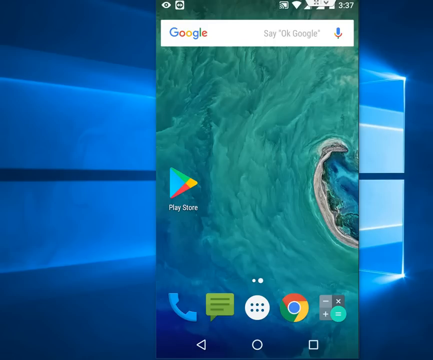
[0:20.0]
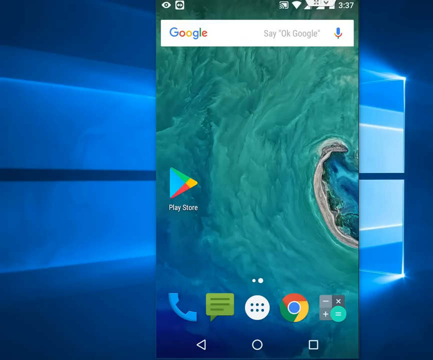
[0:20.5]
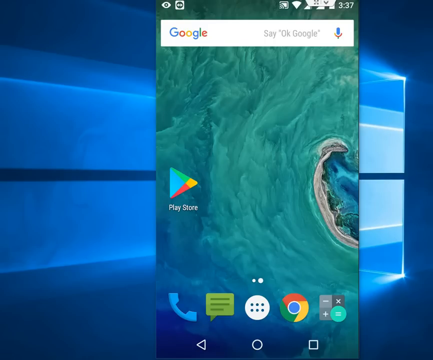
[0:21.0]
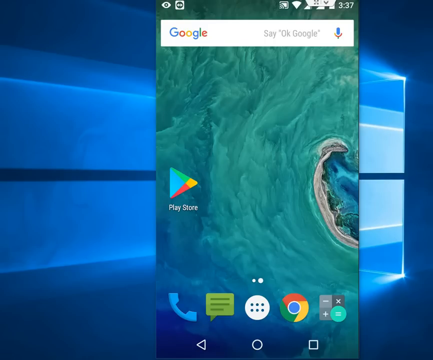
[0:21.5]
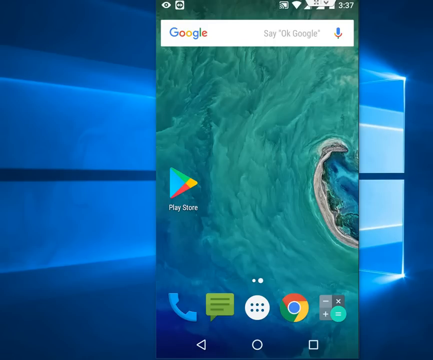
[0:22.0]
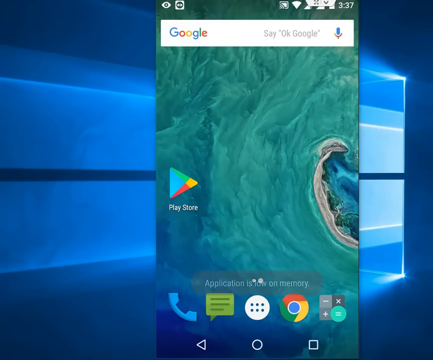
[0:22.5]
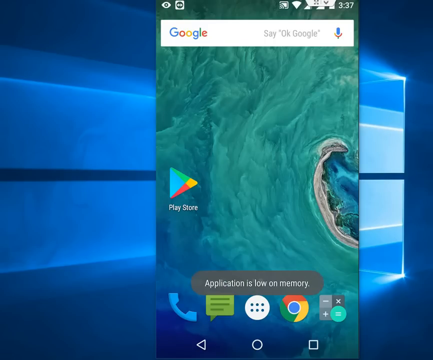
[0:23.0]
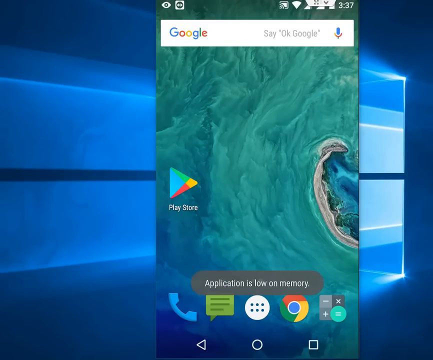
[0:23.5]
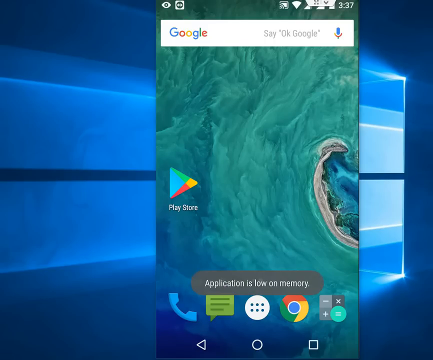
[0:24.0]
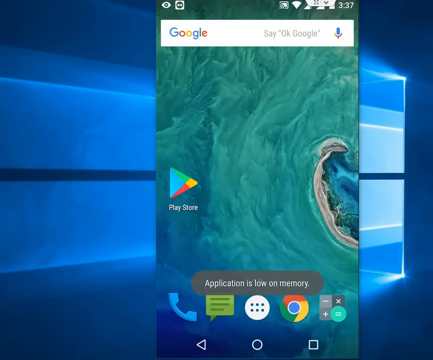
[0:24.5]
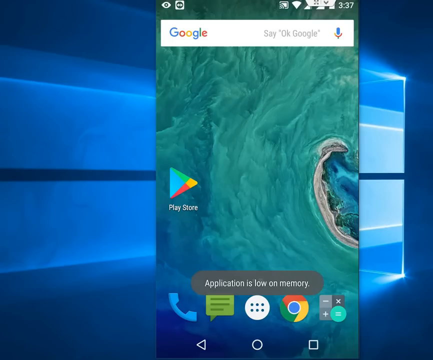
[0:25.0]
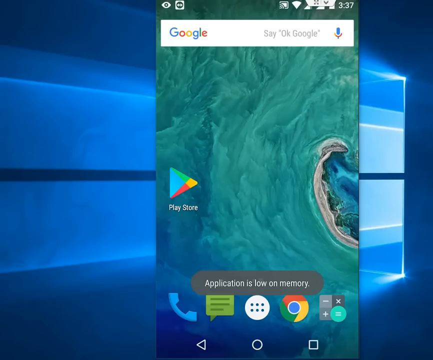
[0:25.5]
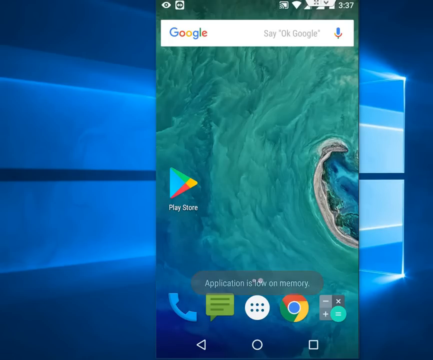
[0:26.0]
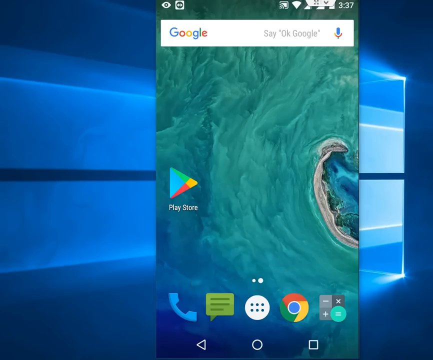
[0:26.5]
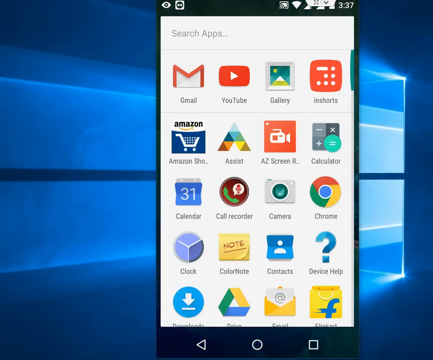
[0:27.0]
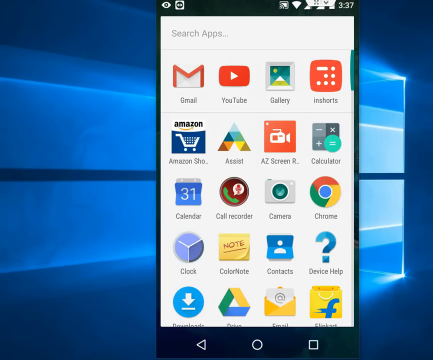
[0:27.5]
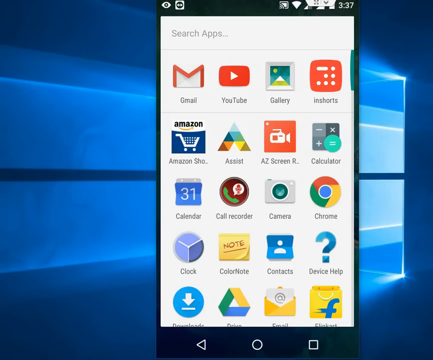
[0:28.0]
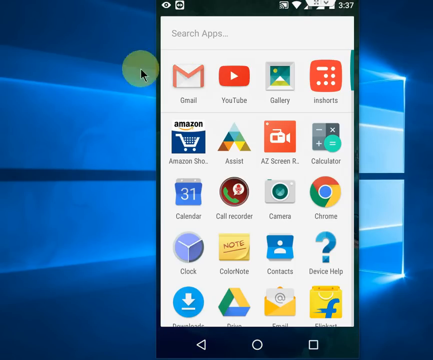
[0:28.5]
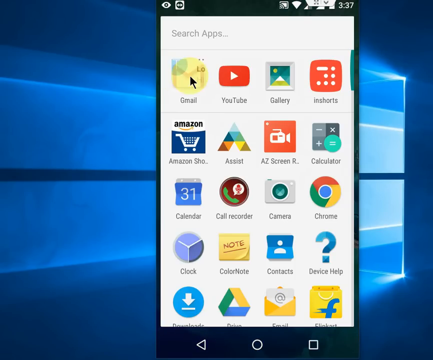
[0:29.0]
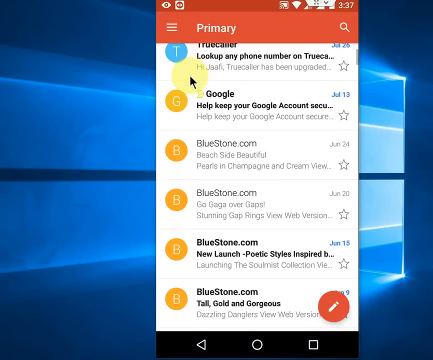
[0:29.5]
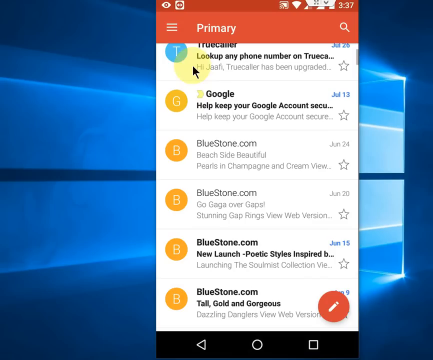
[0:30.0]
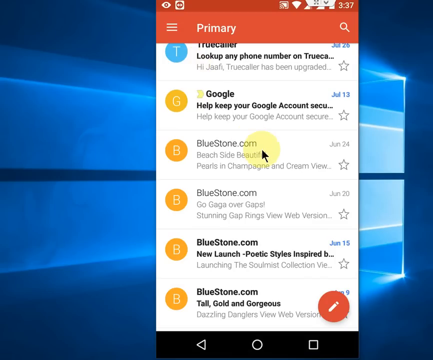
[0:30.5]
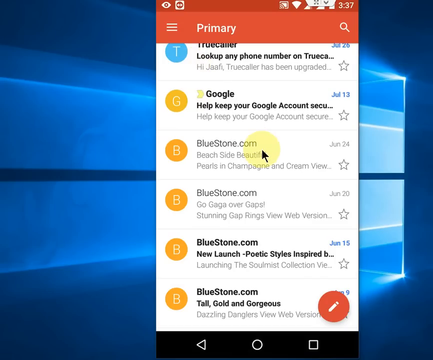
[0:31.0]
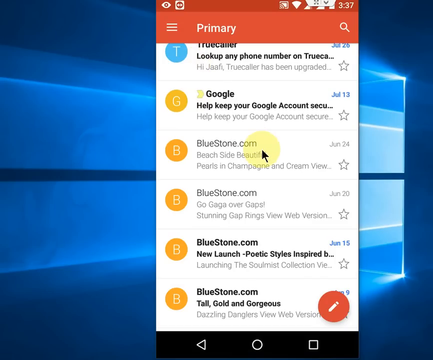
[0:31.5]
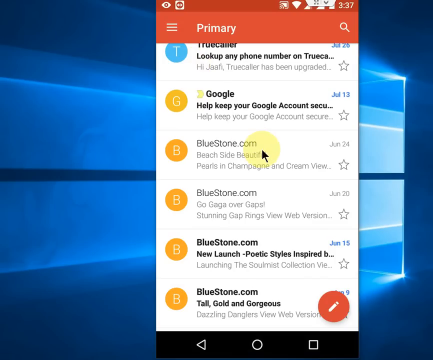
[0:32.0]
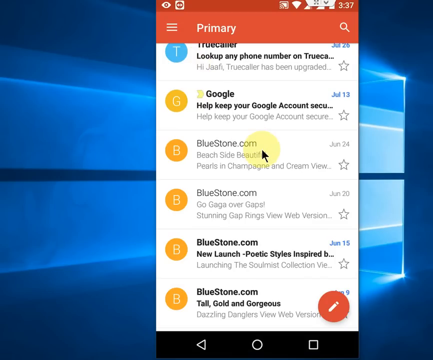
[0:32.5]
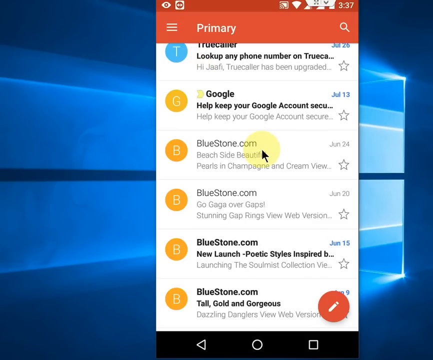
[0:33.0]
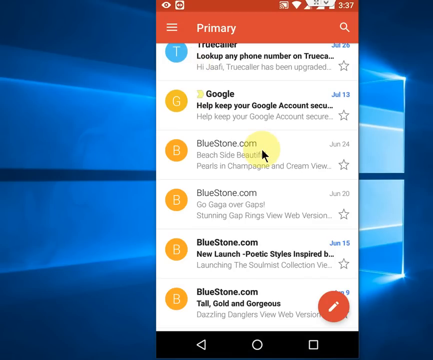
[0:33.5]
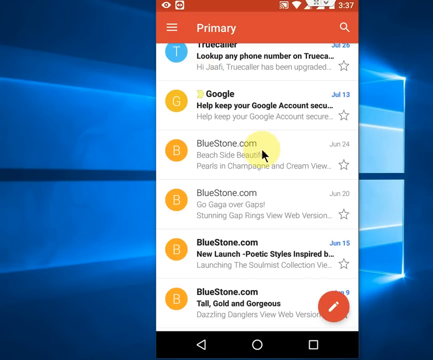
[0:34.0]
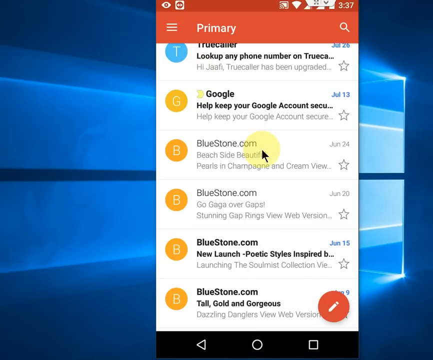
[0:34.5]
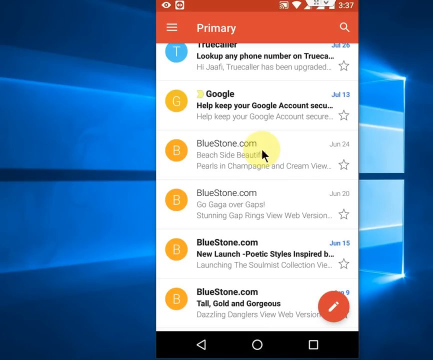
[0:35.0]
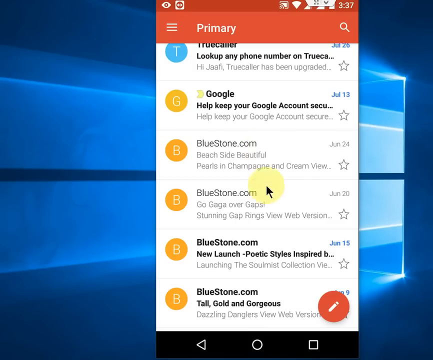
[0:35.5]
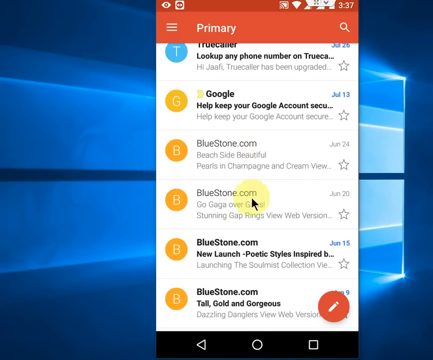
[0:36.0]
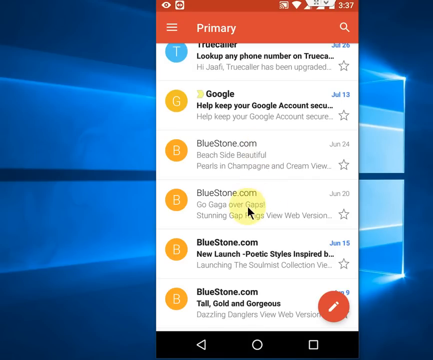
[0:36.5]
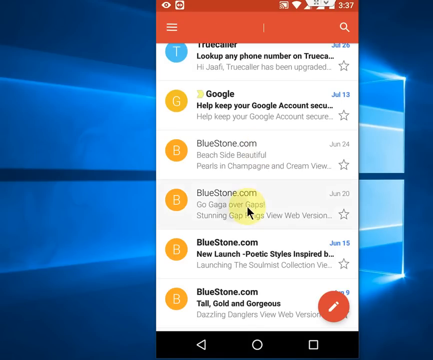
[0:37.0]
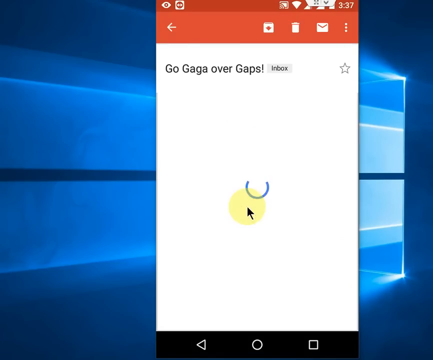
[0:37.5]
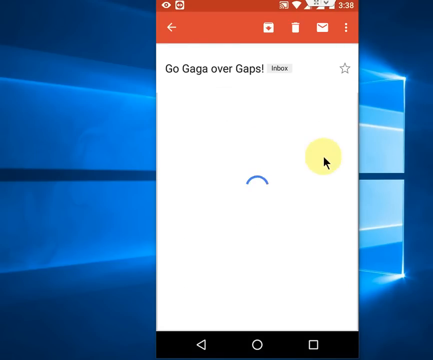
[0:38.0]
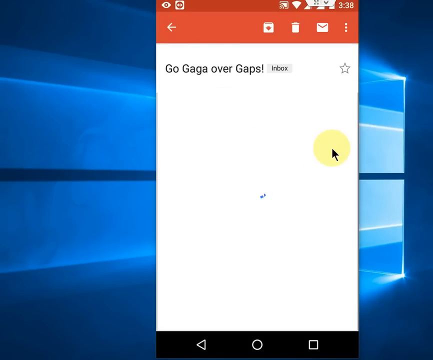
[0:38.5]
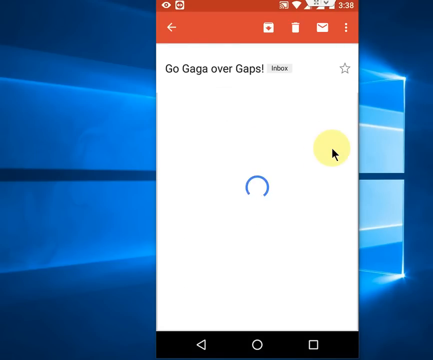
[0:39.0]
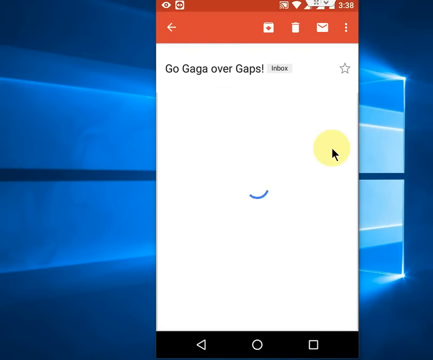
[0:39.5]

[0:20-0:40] The same blue screen is shown. At the bottom, "application is low on memory" appears in a gray rounded rectangle just above the icons at the bottom of the page: the phone, the text, the white circle, Google Chrome and the calculator. The blue background is the same, but the green front screen has switched to a list of the apps on the phone, which looks like Gmail, YouTube, Gallery, InShorts, Amazon Shop, Assist, Easy, Screen, Calculator, Calendar, Call Recorder, Camera, Chrome, Clock, Color Note, Contacts, Device Help, a down arrow, a triangle, an email icon and a Facebook link. The user, whose cursor is a yellow circle, clicks on Gmail and then clicks on bluestone.com.